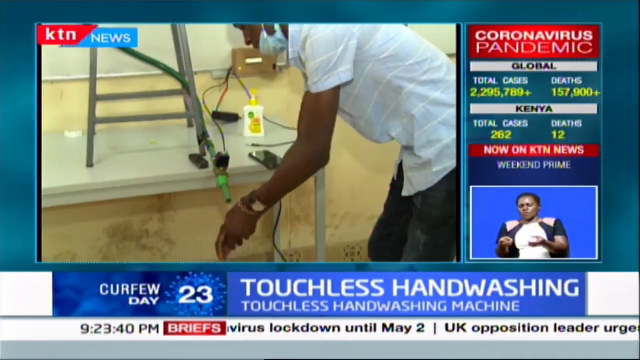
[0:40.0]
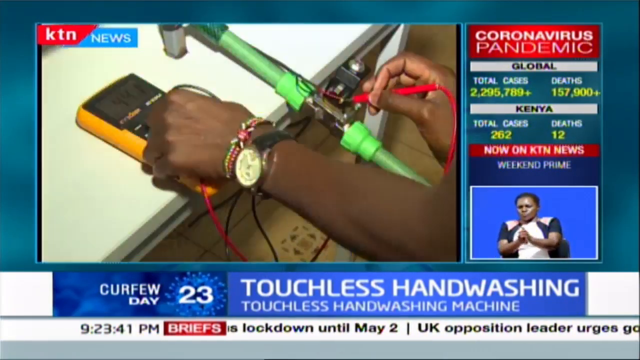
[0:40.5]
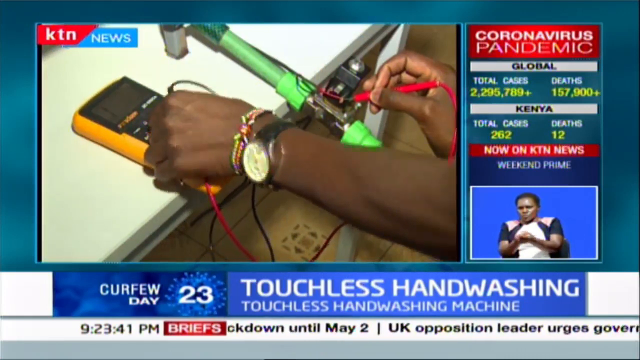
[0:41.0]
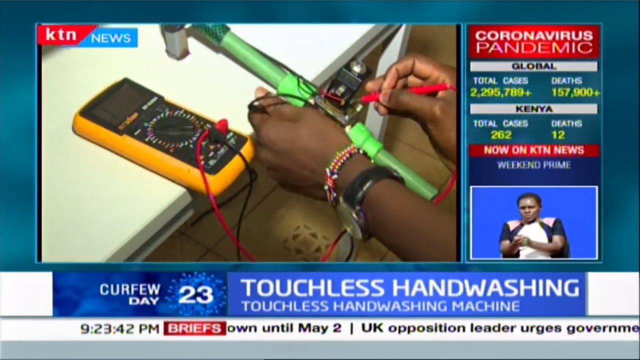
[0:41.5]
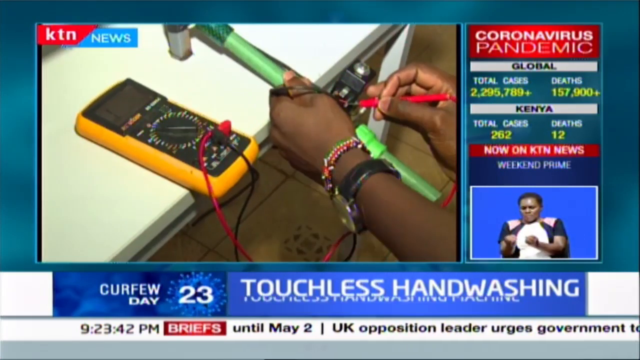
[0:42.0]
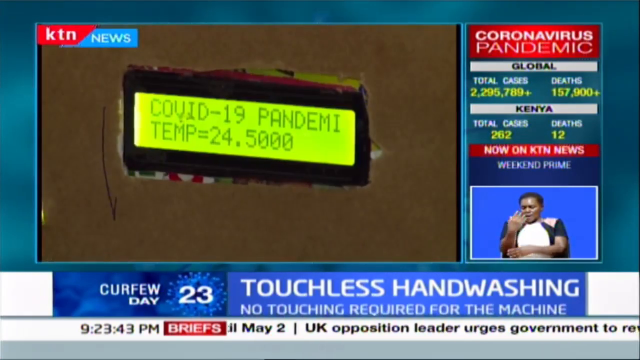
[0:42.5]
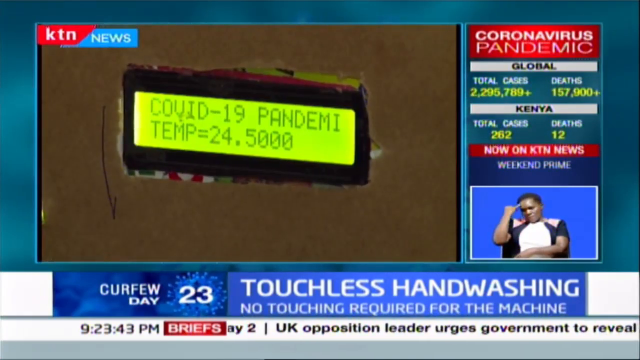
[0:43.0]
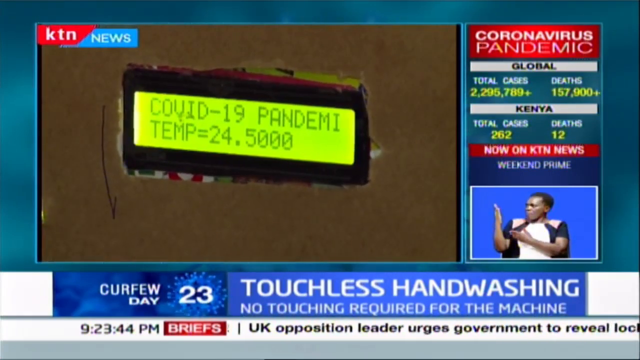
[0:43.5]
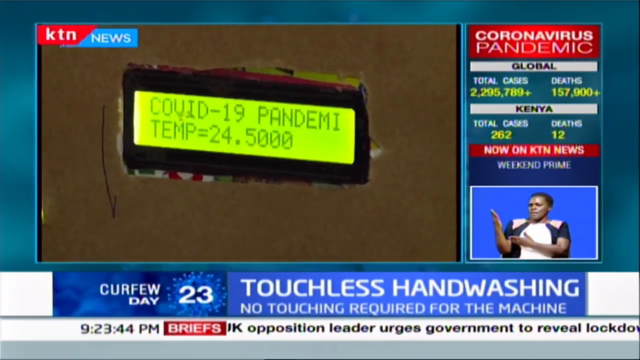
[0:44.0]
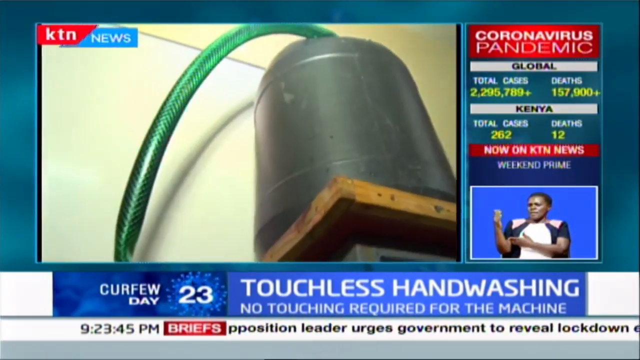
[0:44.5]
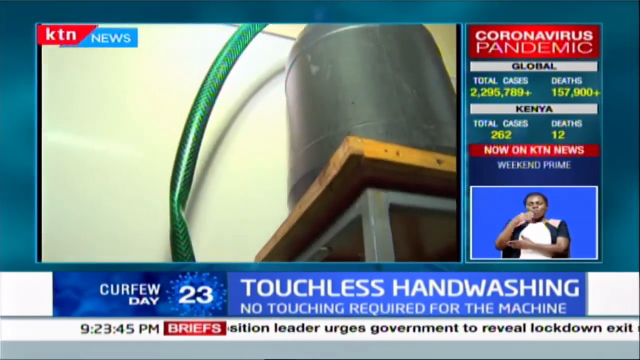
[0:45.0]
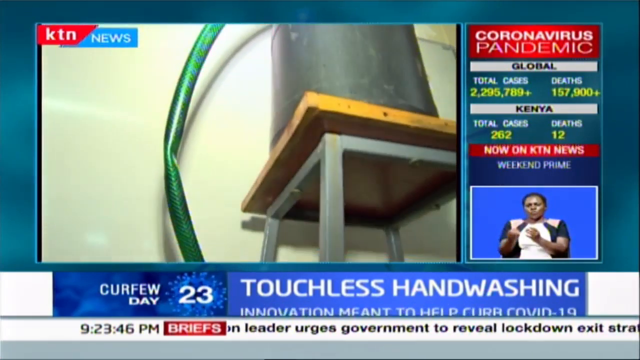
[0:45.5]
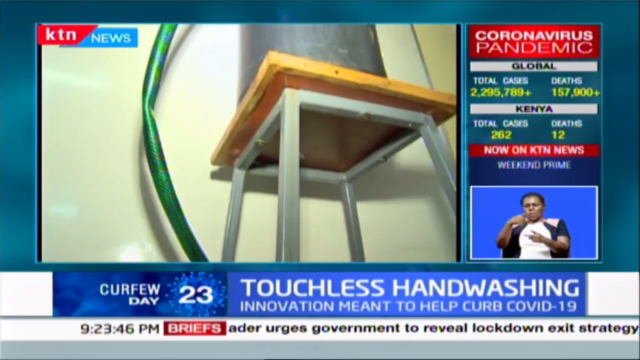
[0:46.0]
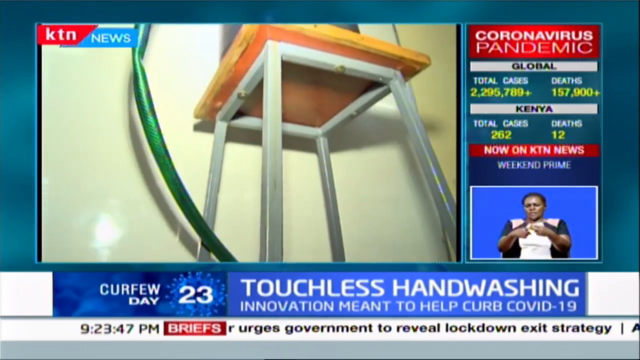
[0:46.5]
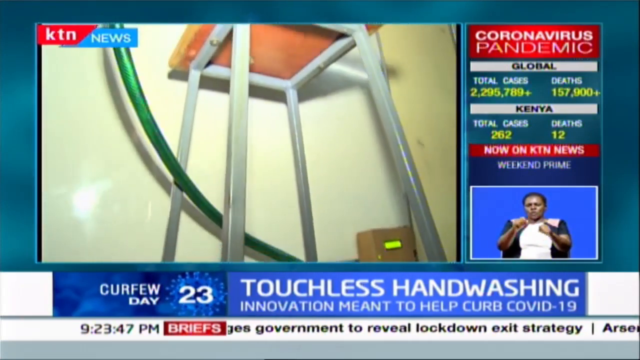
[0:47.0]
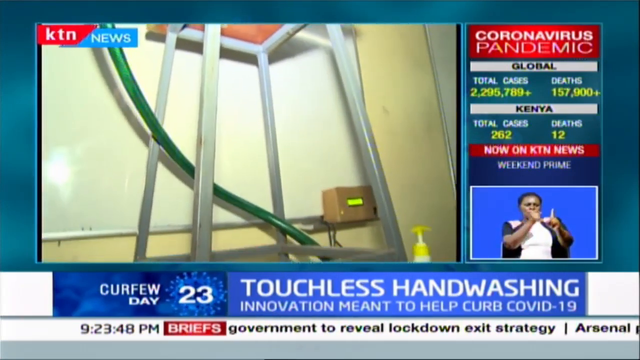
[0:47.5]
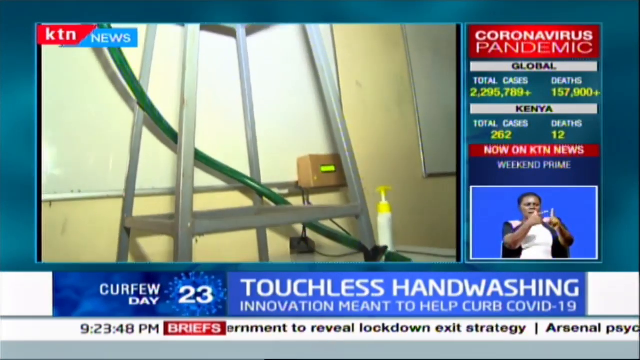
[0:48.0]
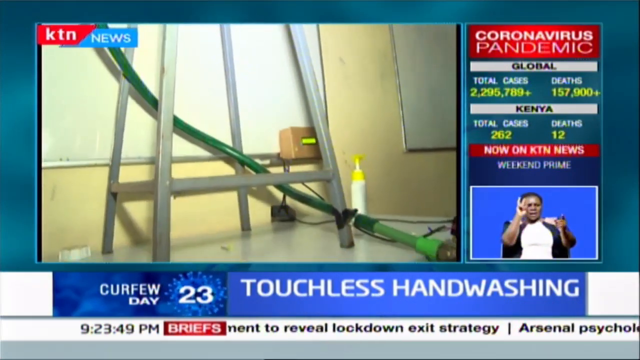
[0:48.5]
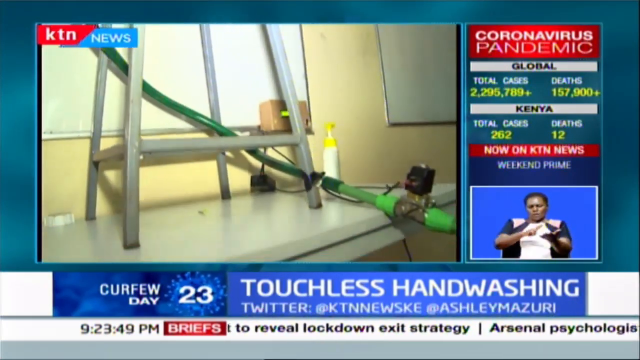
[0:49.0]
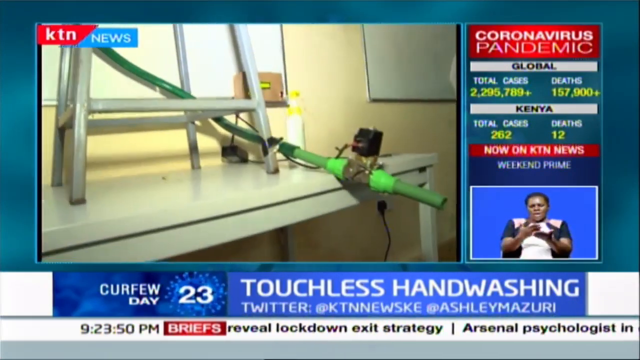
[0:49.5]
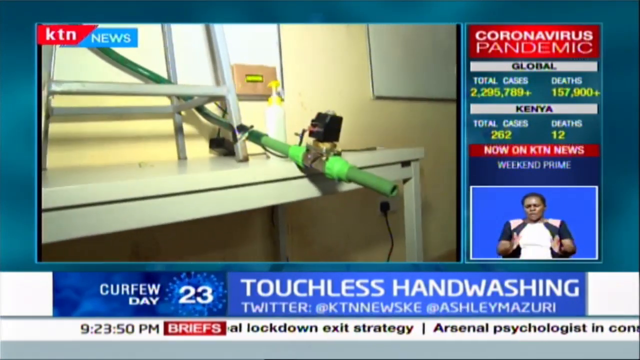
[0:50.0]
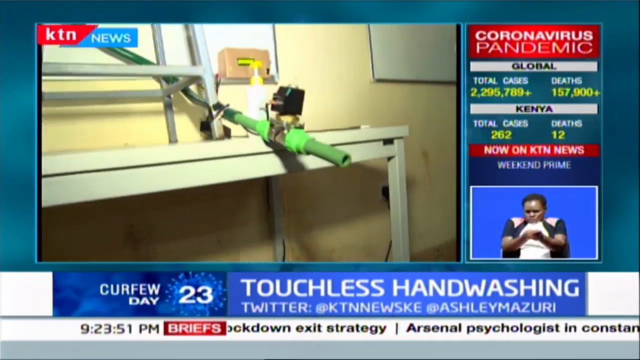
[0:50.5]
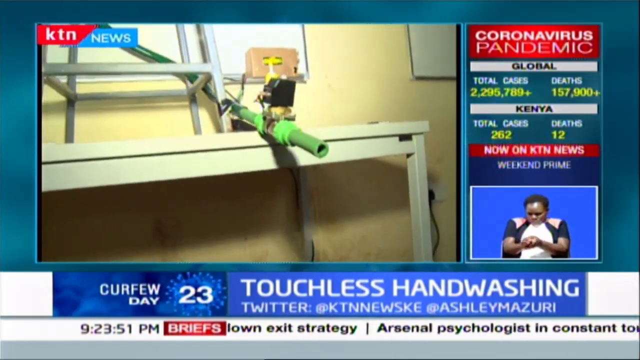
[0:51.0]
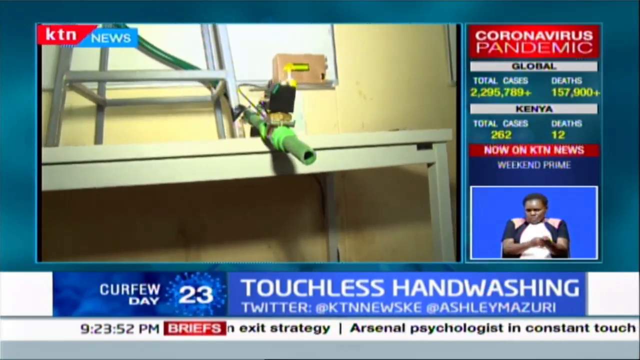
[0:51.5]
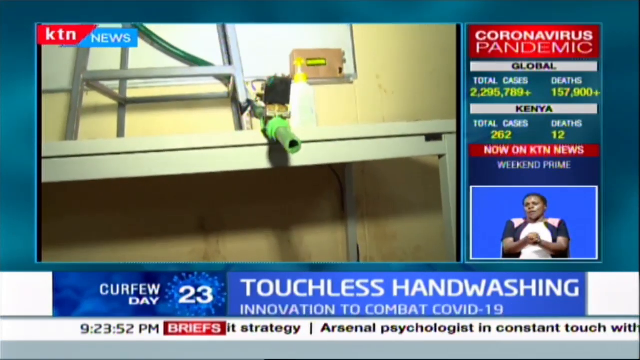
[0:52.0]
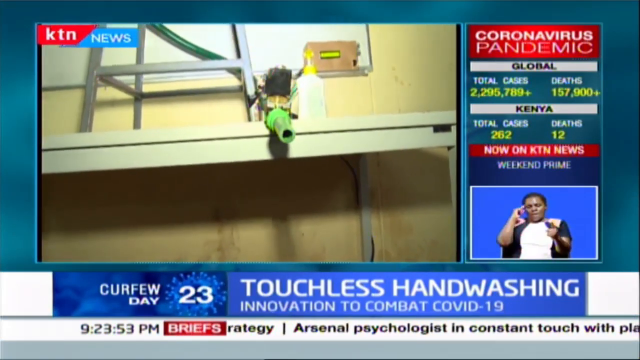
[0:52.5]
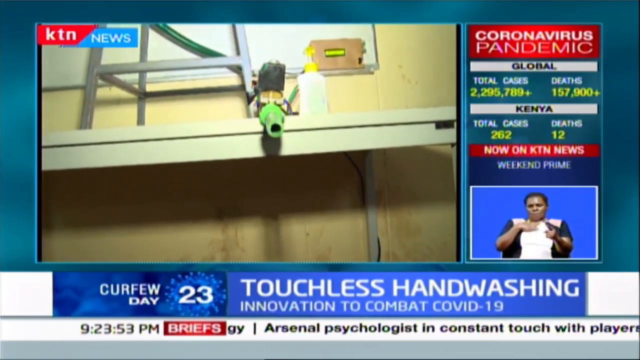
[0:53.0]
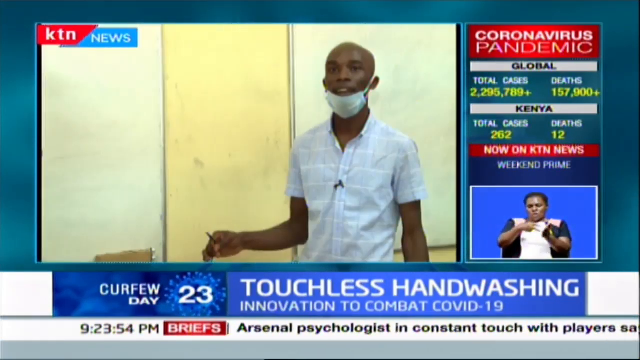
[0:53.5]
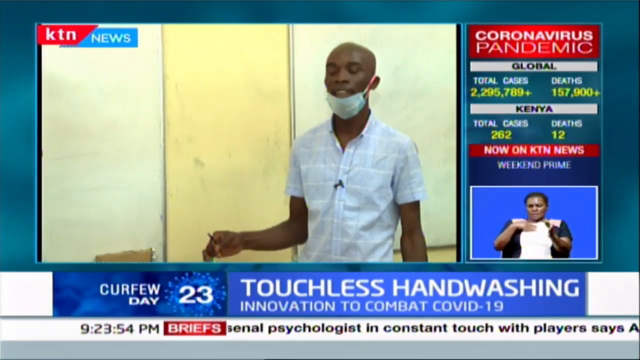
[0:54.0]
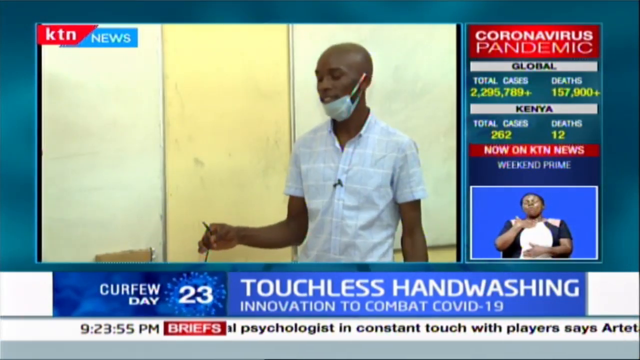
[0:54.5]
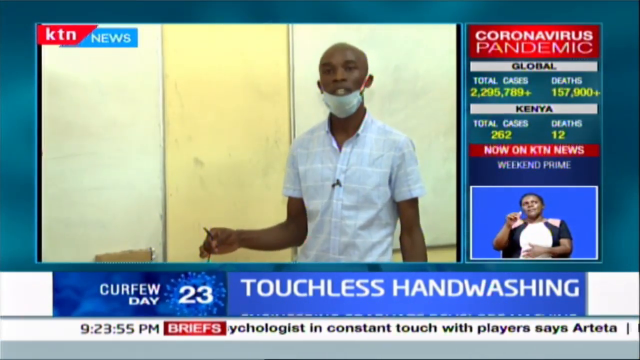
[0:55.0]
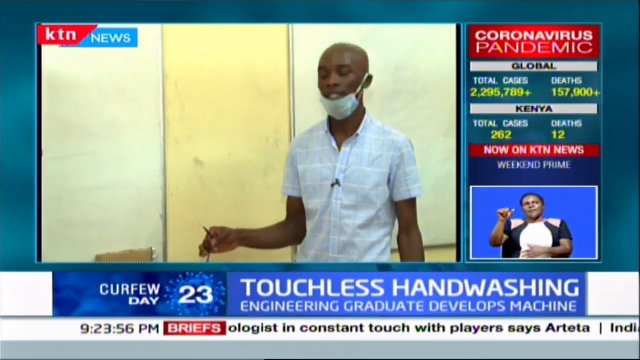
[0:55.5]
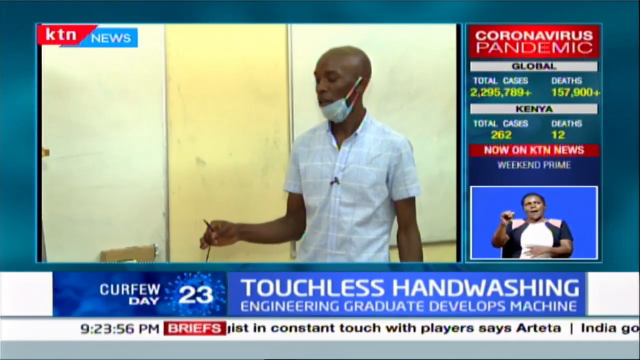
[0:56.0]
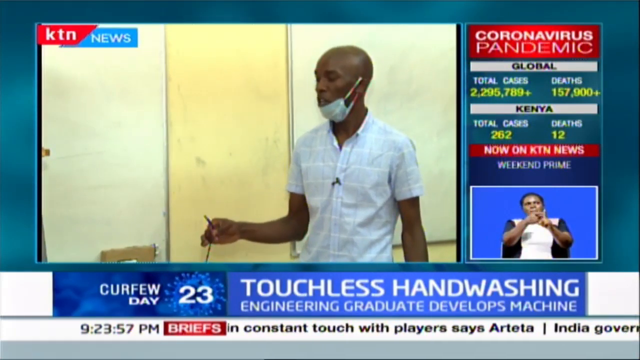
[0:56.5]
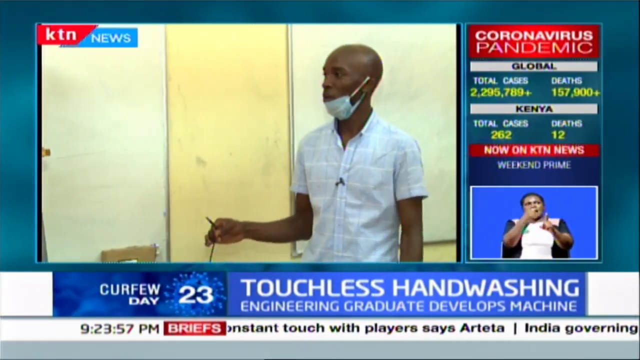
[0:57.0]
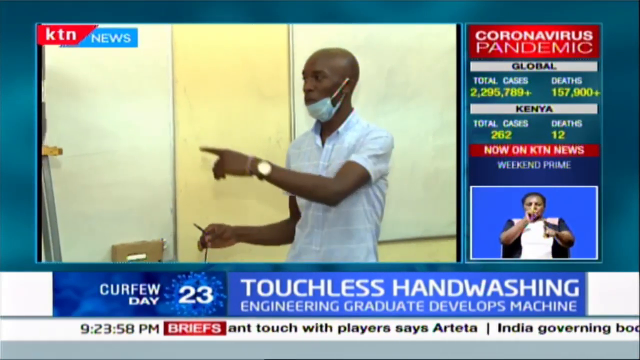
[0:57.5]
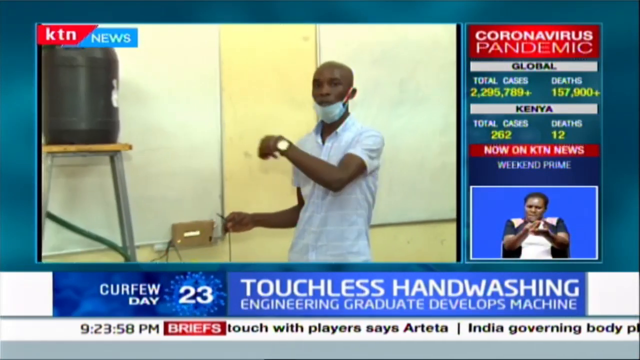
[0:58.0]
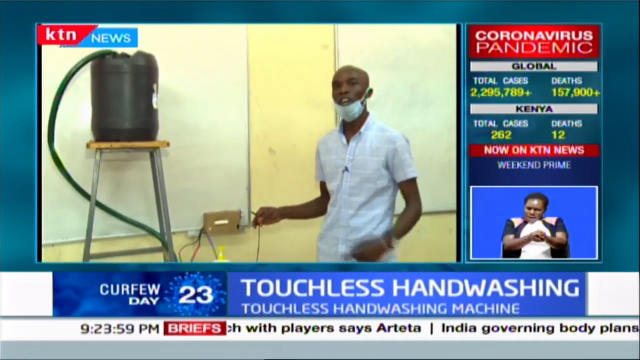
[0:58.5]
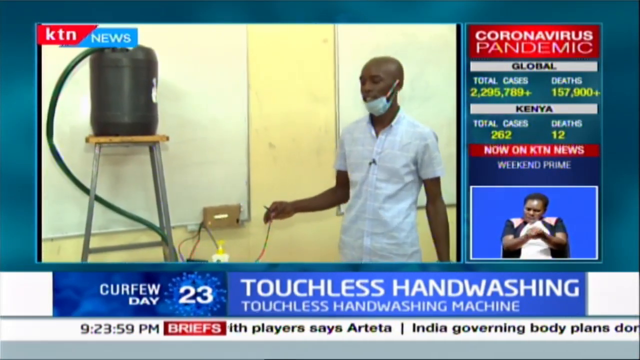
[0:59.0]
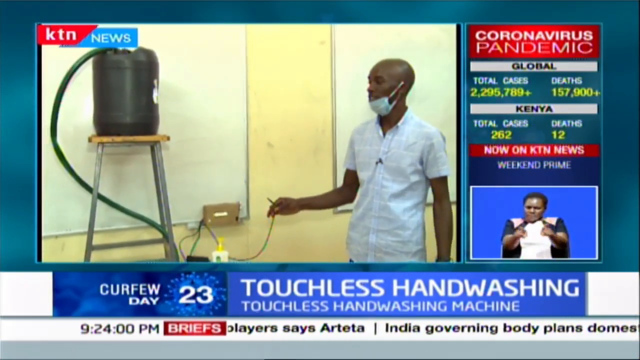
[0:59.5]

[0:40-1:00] A man who appears to be an inventor has set up a water station, seemingly meant to purify or take germs off people's hands. There are electrical voltage readers next to the water station, and a thing on the wall flashes light, possibly something that kills germs. An LED screen on or beside the water tank says "COVID-19 pandemic" and shows a water temperature reading "temp = 24.5." The man demonstrates filling up a portable water tank and washes his hands with the water.